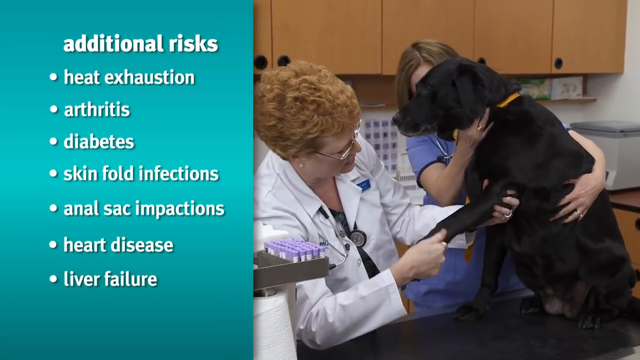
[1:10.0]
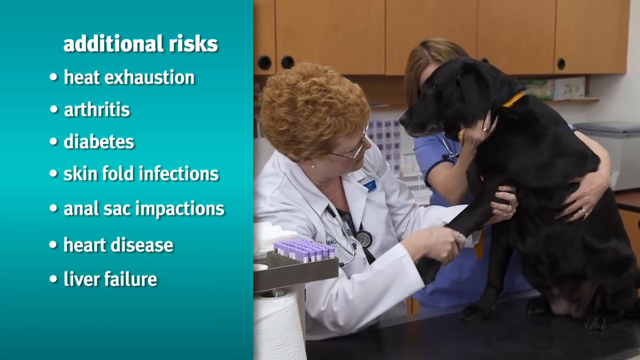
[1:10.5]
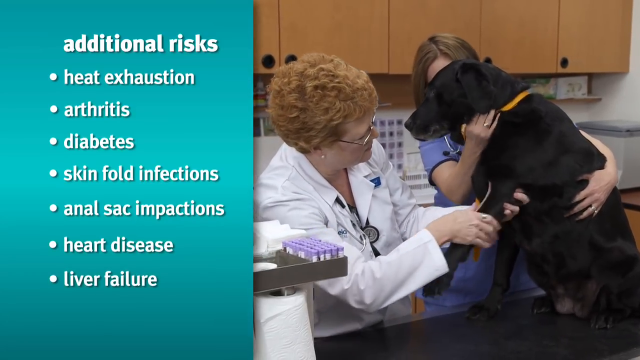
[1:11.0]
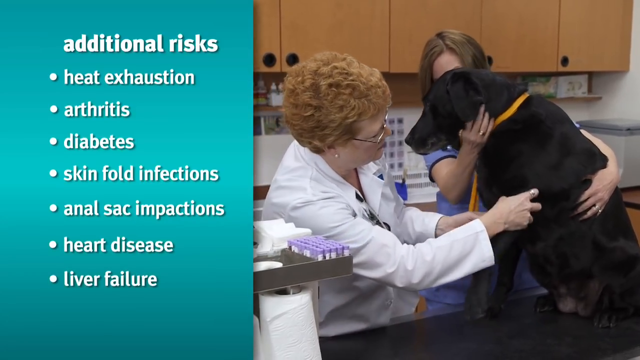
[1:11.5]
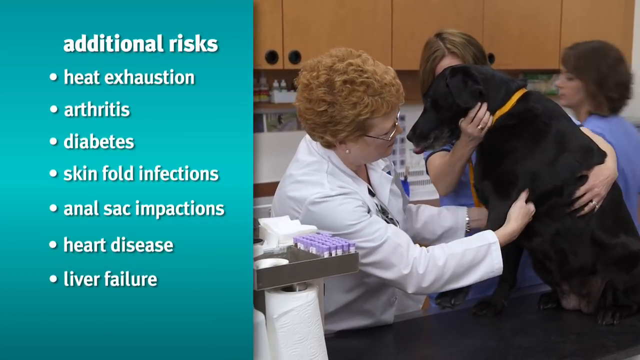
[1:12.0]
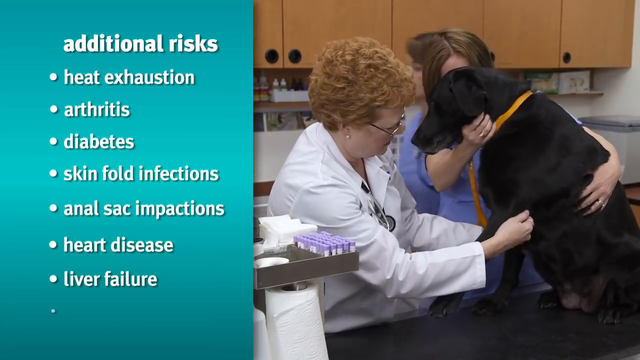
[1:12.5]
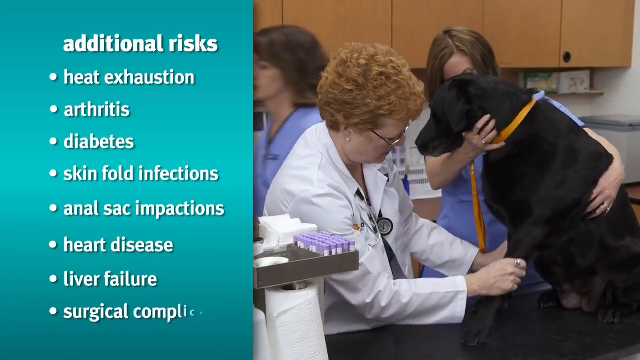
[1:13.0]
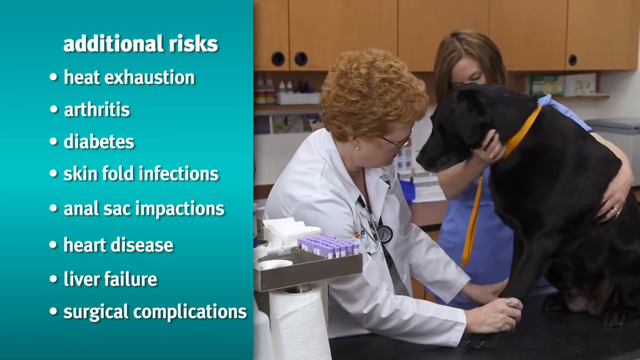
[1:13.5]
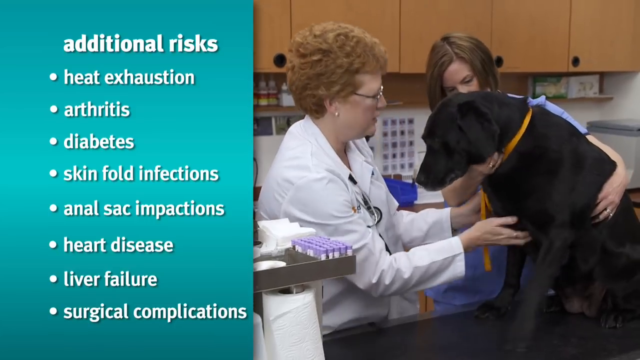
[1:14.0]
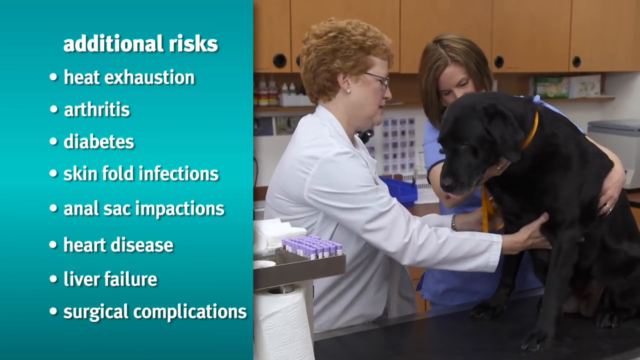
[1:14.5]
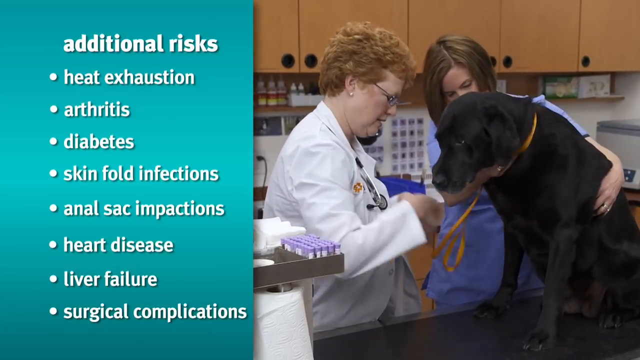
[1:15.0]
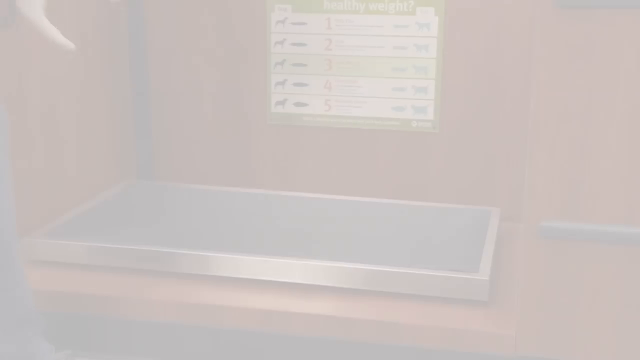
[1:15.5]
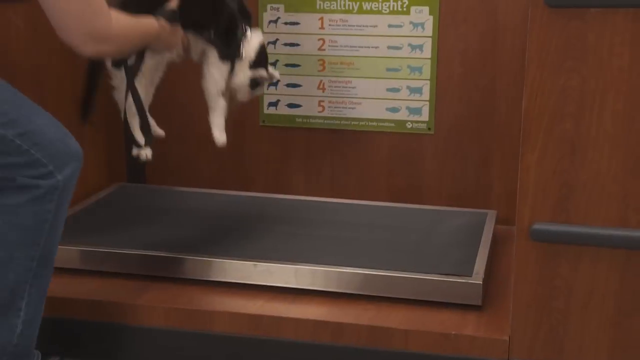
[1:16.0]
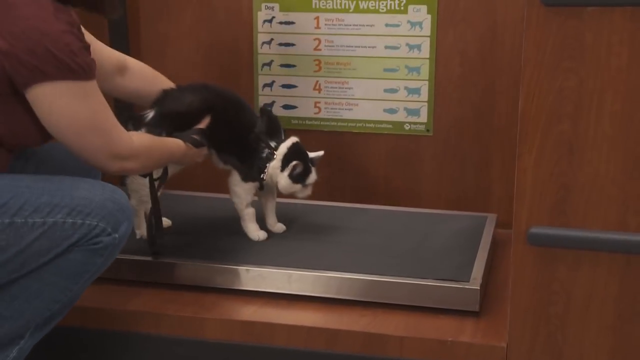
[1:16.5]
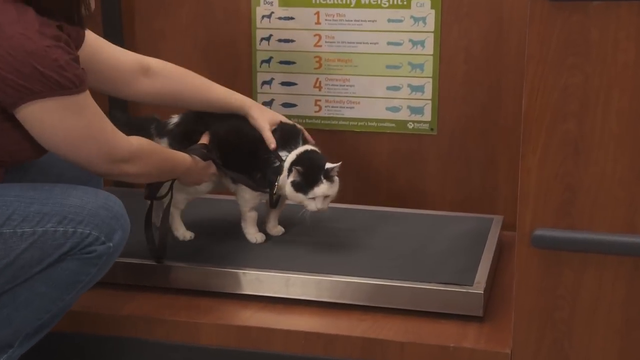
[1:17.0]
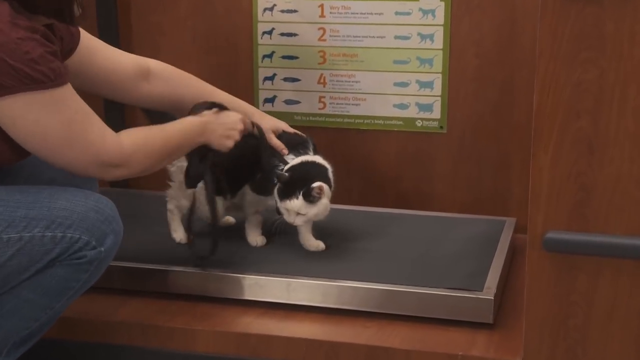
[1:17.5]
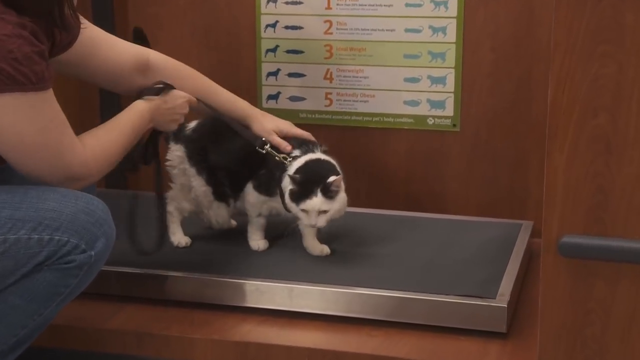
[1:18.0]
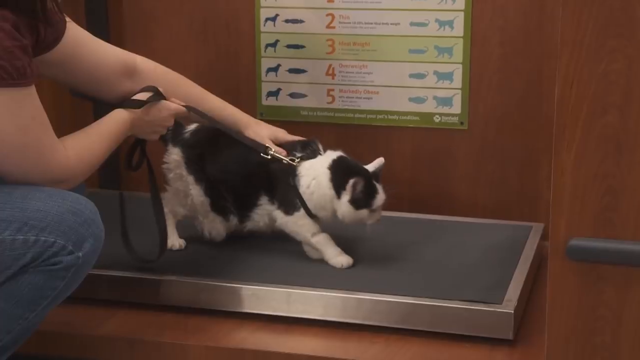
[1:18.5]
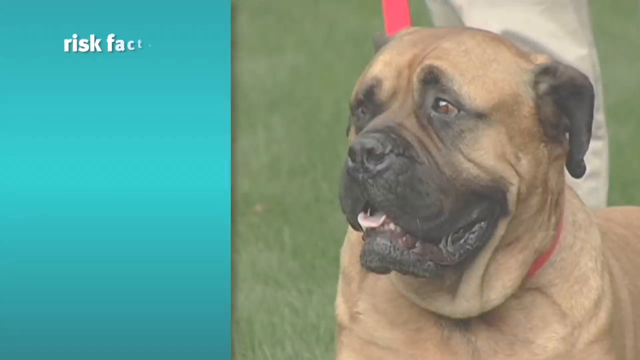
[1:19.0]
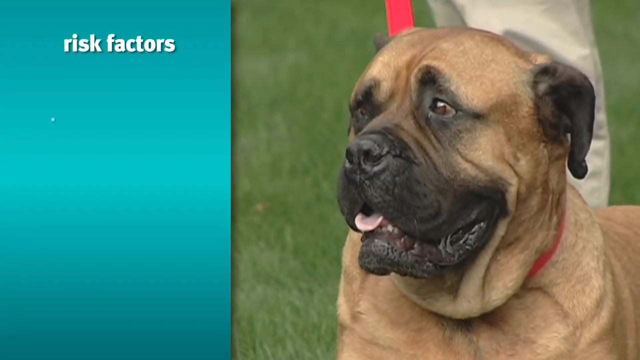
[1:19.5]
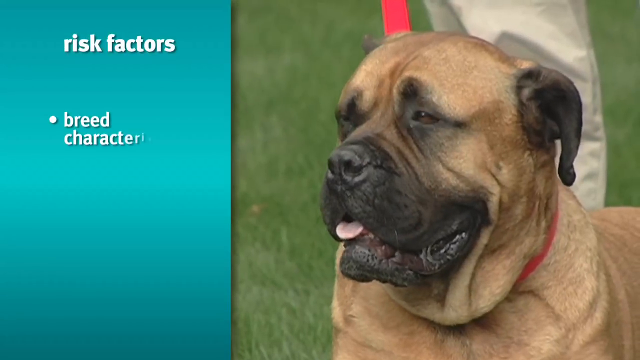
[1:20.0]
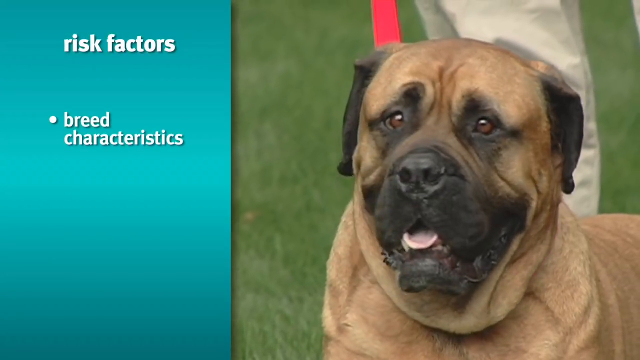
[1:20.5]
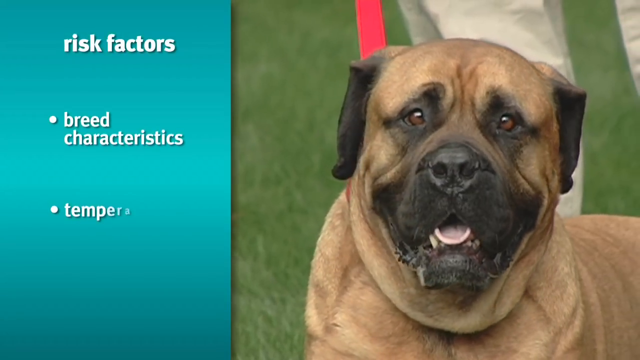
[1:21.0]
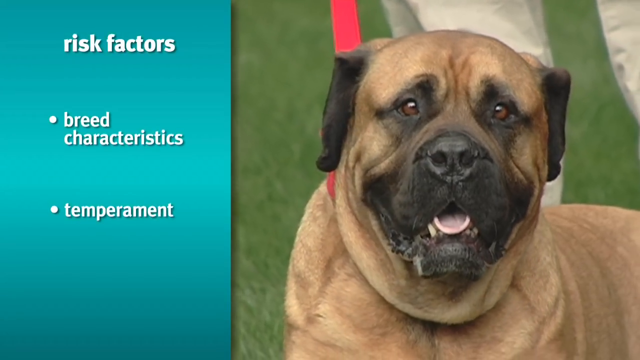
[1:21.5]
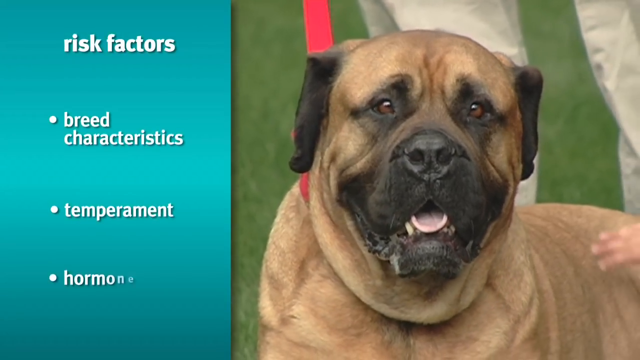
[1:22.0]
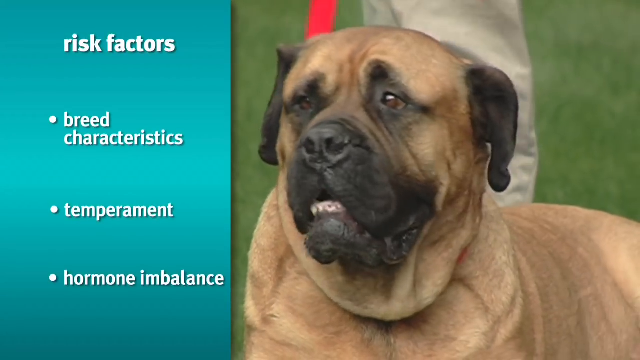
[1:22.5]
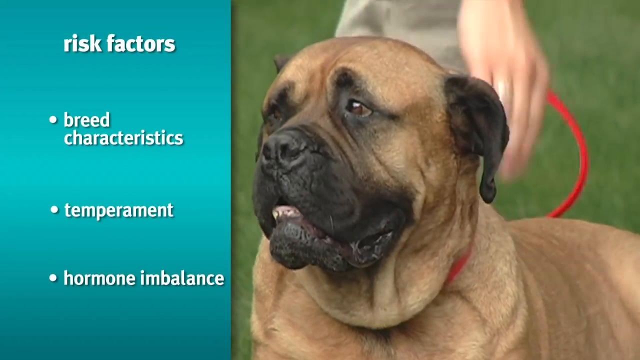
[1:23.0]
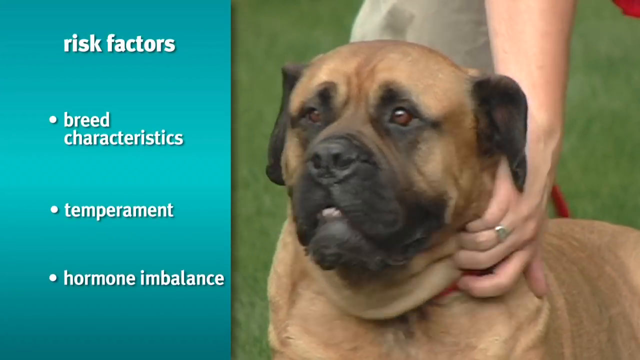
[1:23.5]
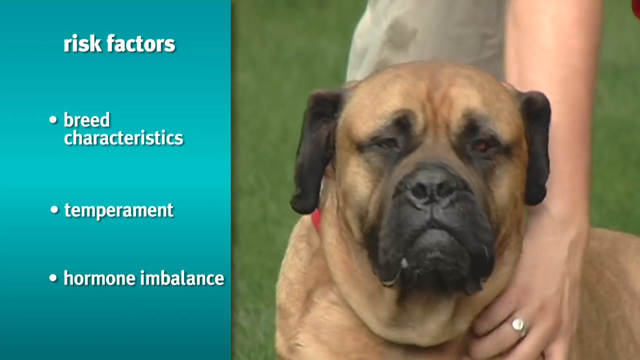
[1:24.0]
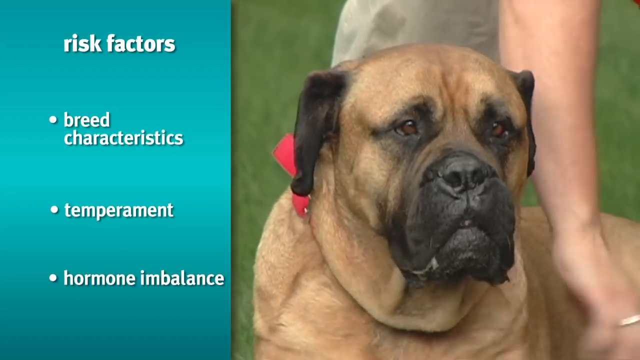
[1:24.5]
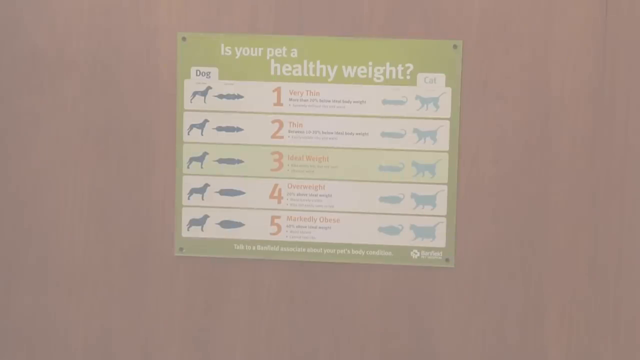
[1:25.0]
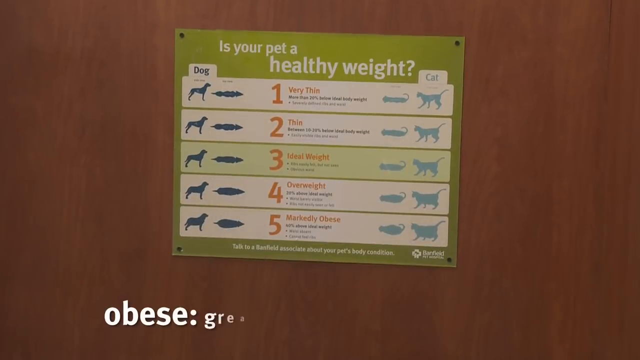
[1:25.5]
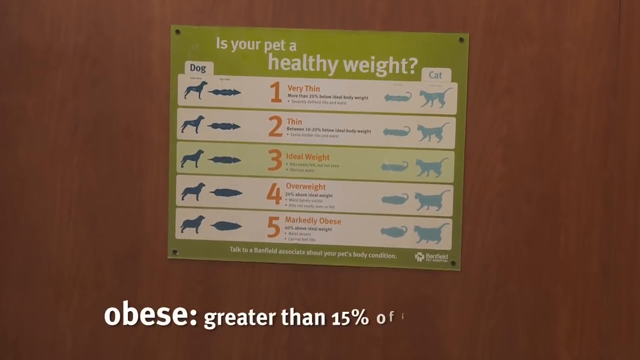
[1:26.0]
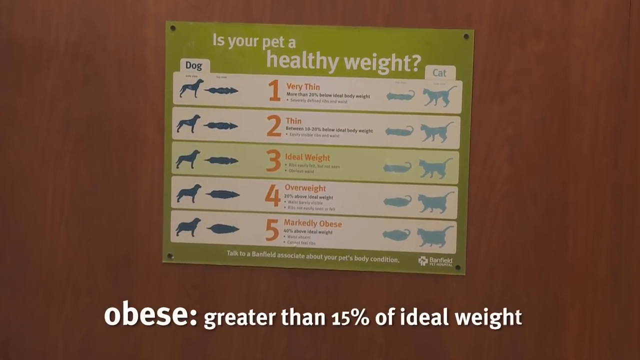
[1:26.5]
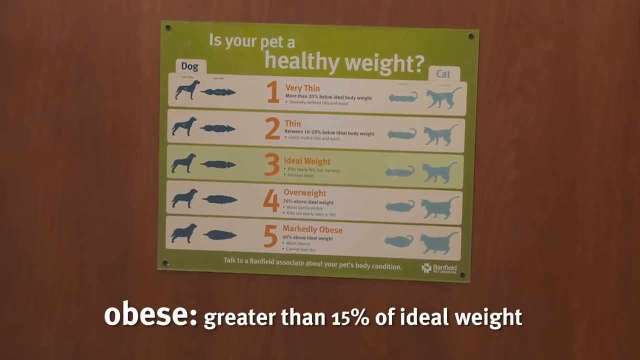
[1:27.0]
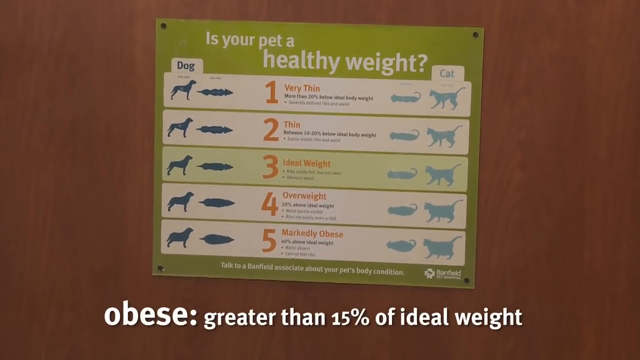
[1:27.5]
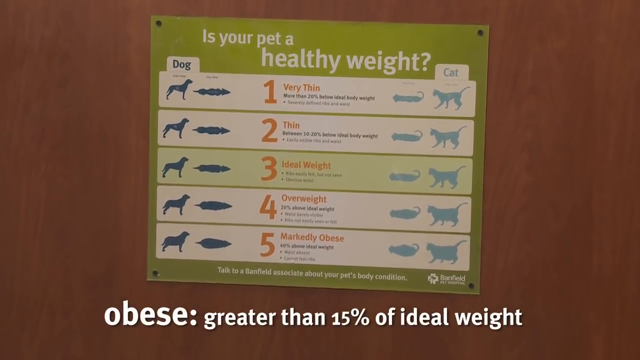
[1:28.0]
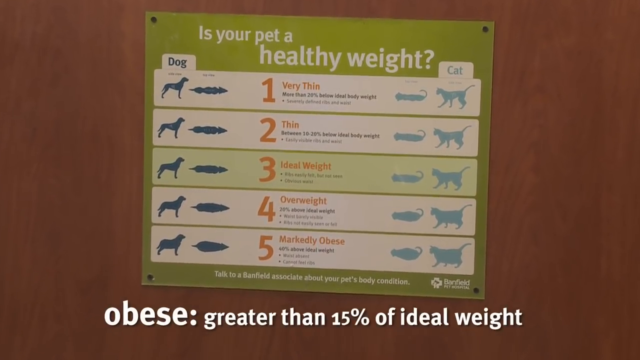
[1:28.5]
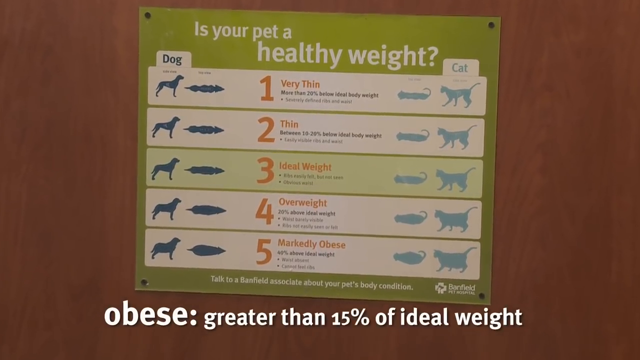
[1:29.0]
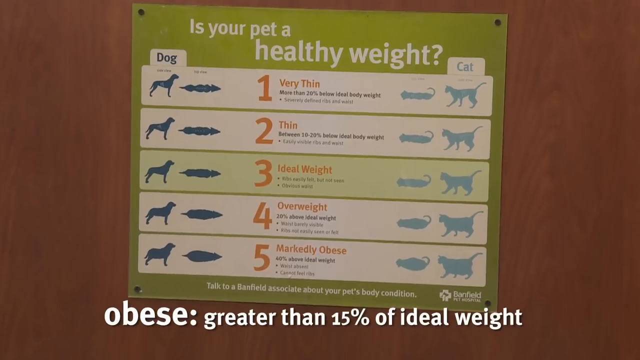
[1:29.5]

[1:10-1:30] The information on pet health risks continues, mentioning skin infection, heart disease, liver failure, risk factors such as temperament and hormone imbalance, and greater than 50% of ideal weight.